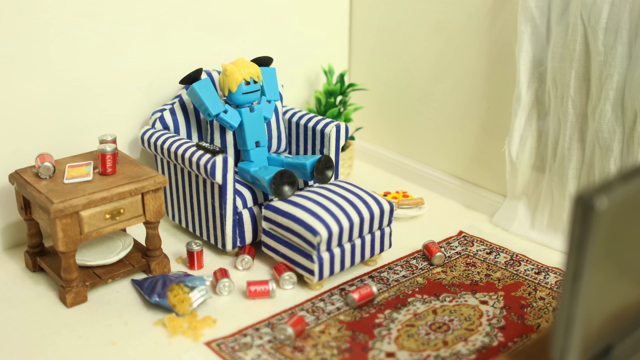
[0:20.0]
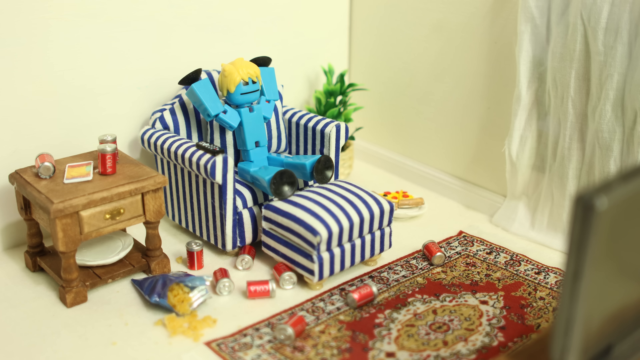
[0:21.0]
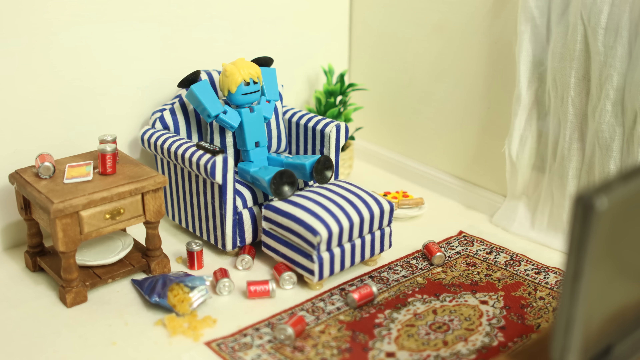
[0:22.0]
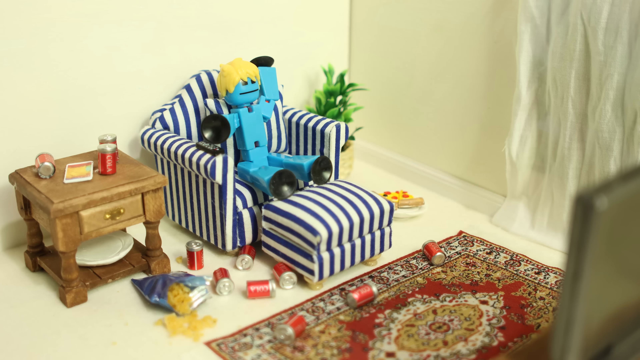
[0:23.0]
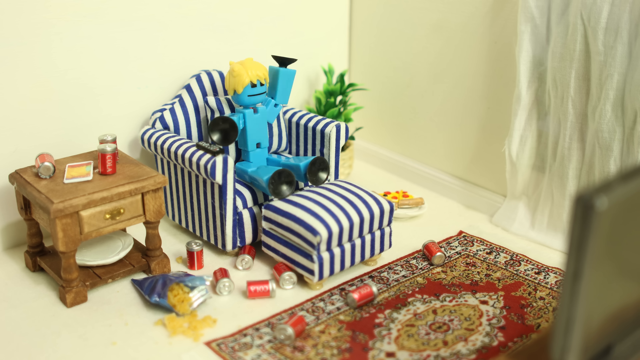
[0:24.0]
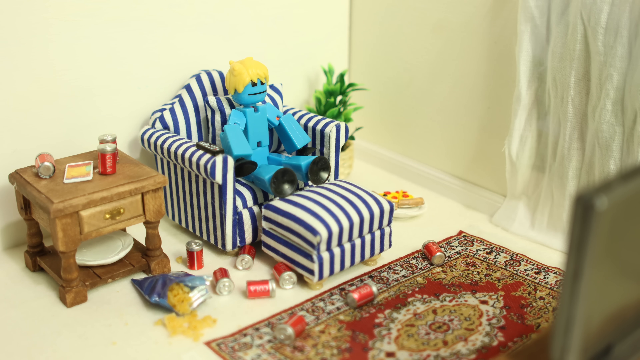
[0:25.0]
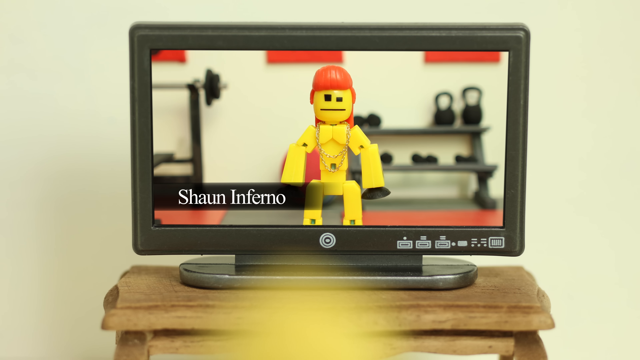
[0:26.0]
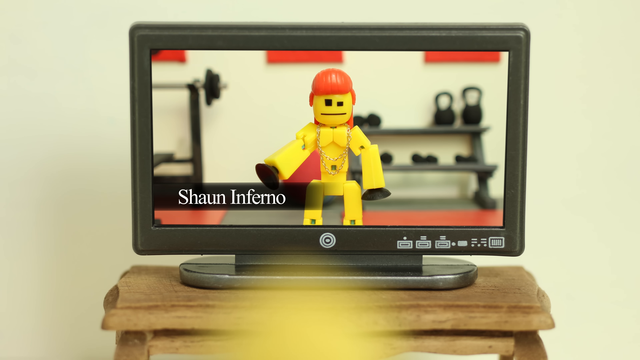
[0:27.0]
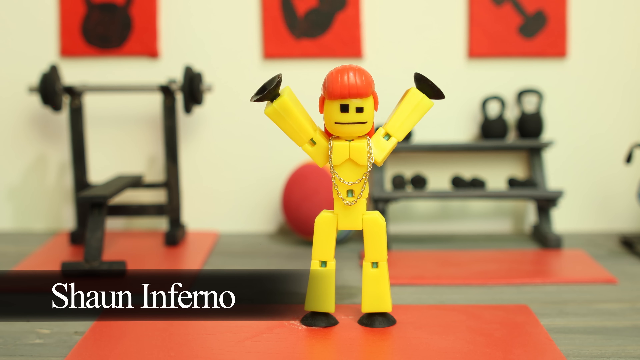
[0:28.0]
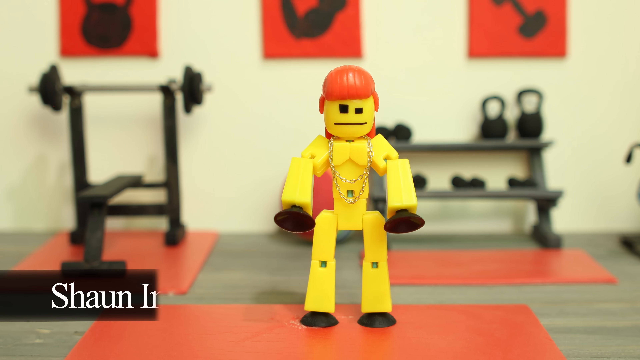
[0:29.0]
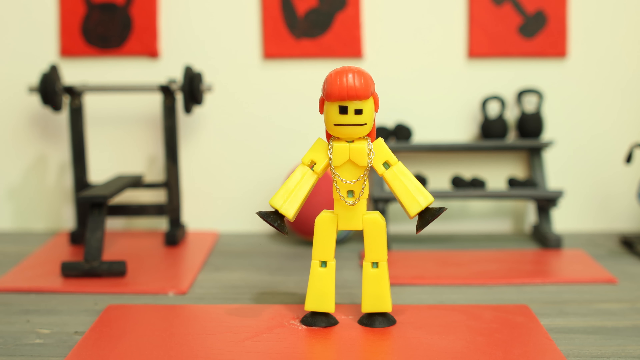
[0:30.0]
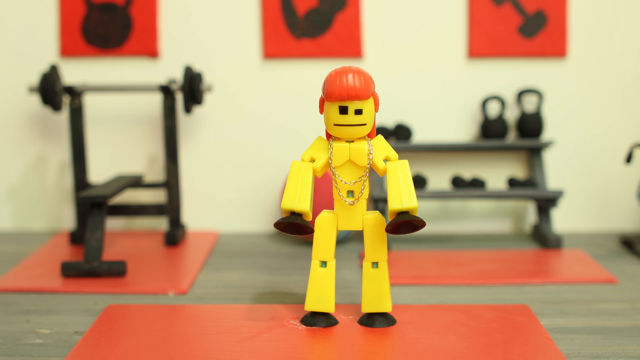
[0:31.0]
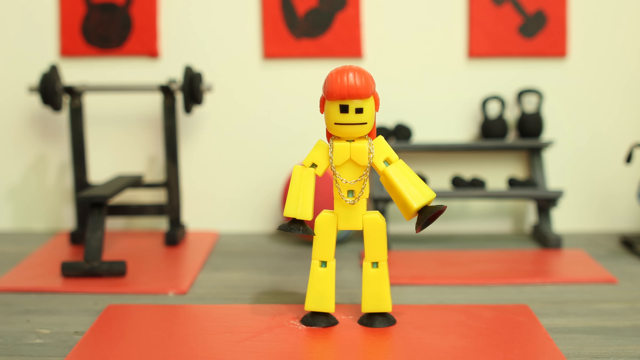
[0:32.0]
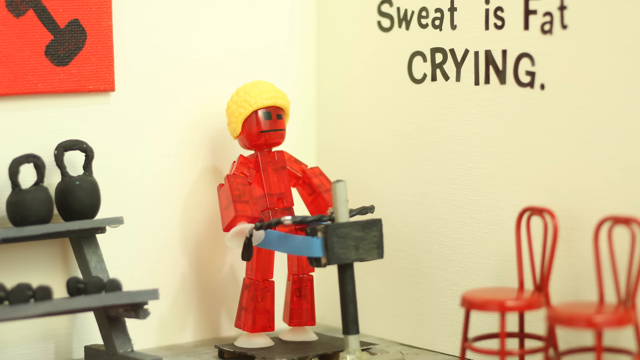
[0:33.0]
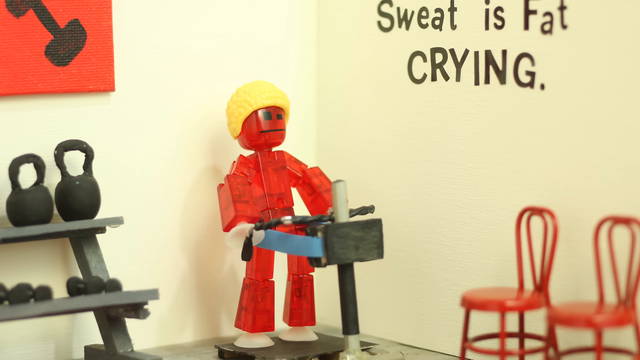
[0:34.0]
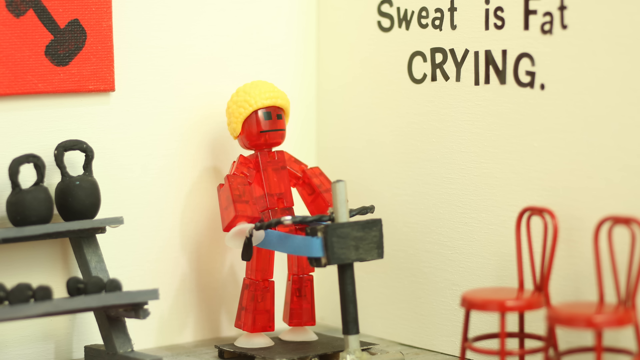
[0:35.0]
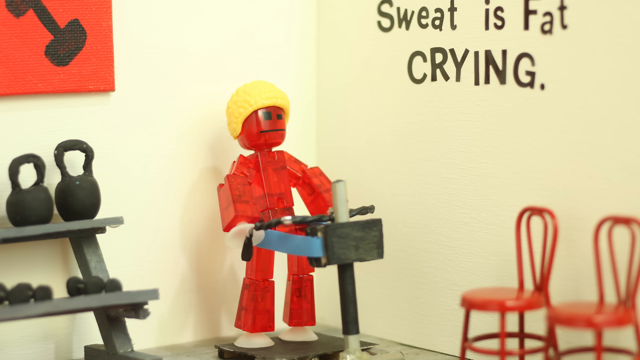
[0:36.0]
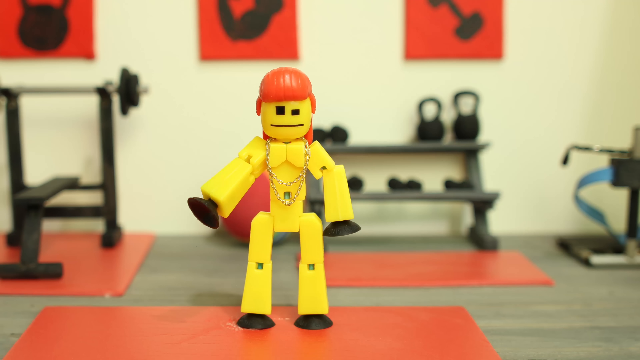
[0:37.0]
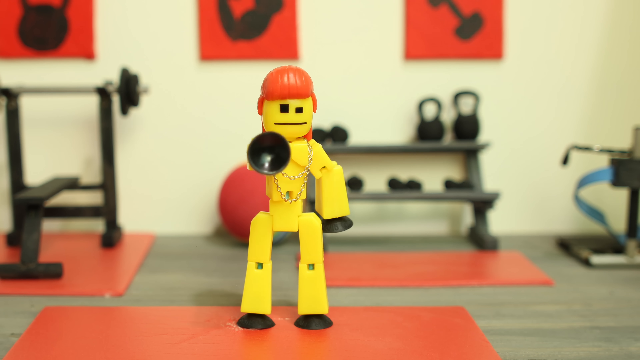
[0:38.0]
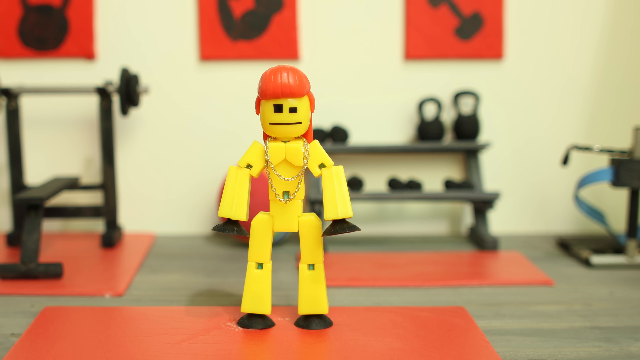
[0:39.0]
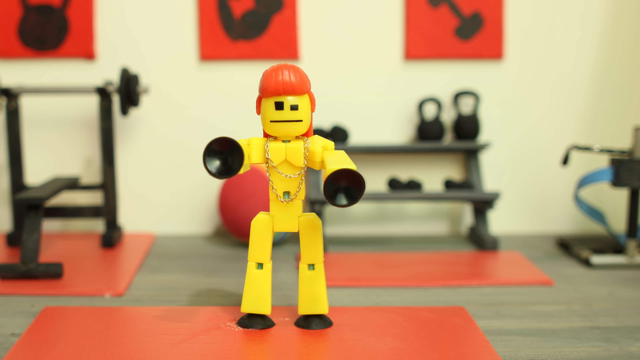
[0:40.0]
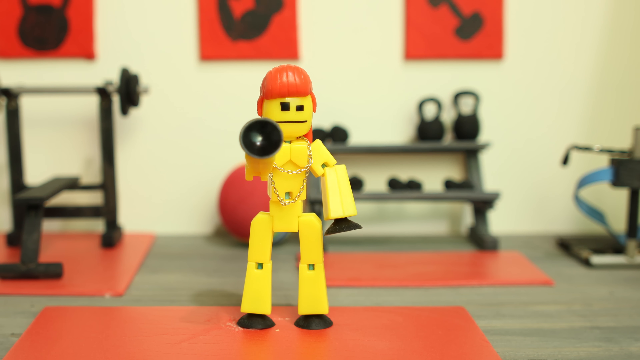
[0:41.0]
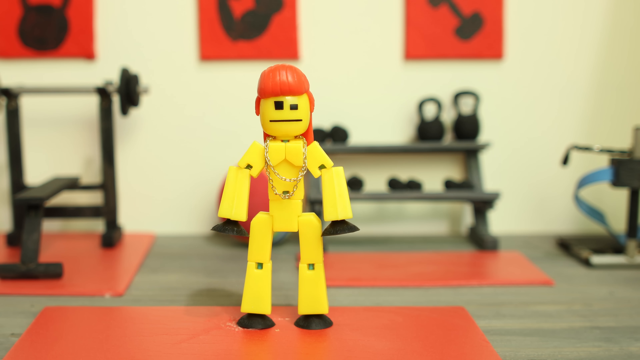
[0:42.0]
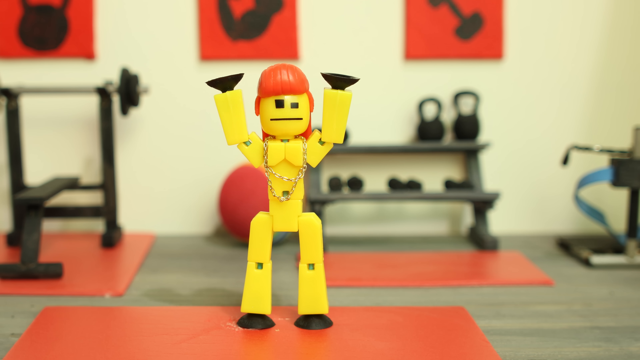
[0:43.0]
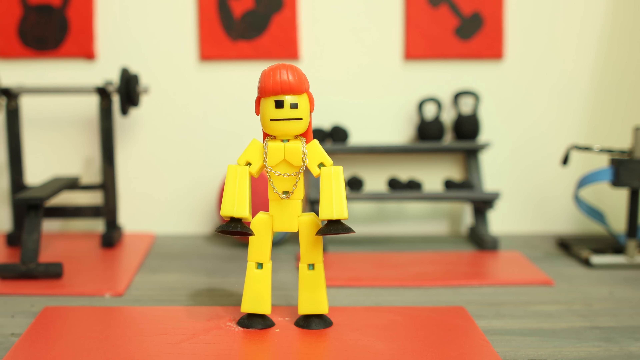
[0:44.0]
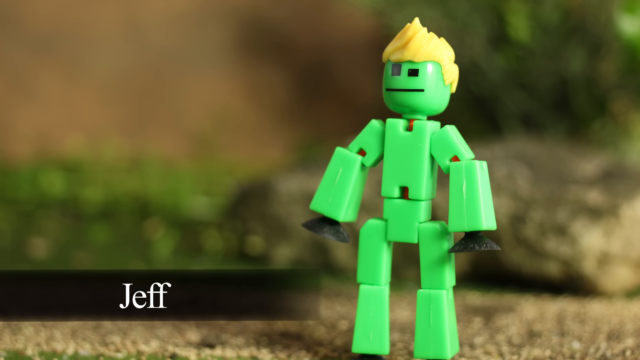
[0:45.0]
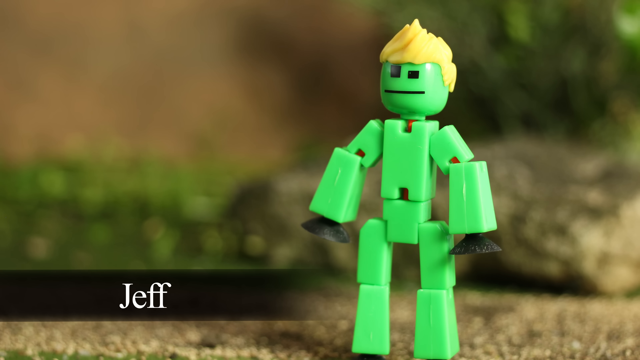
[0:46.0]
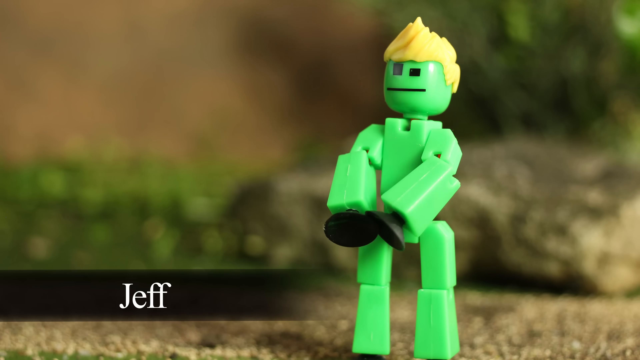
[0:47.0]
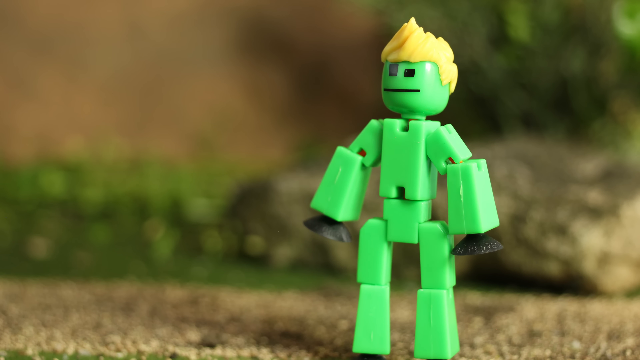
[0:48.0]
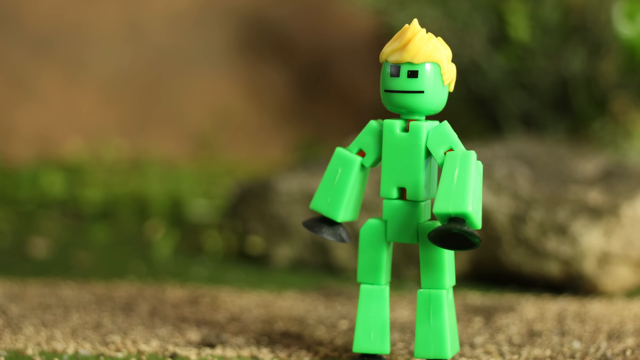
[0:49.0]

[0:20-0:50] A Lego-type guy is sitting on a blue striped chair with an ottoman, watching a little TV show. On the show, a yellow guy with a gold chain lifts his arms up and down. Another guy, whose body is red, looks like he is playing a game. The yellow guy looks like he is working out; he has weights and a weight bench behind him and is sitting on a mat. A guy named Jeff, with a green body, is kind of just moving his arms. The blue guy is sitting on the chair with blue stripes, and next to him is a table with some pop cans, with more pop cans on the floor next to him. There could be some pizza. The table has a drawer on the bottom, and there appears to be a plate. There are curtains in the room and a red rug. He appears to just be sitting there watching TV.